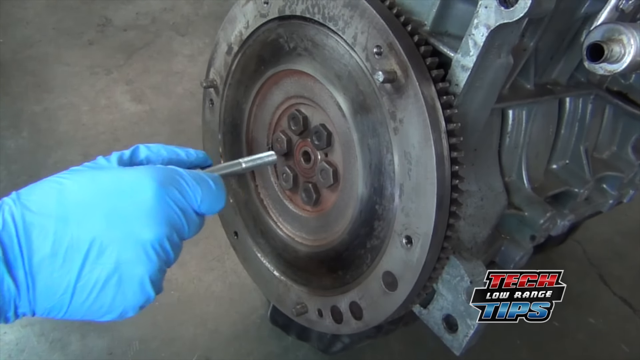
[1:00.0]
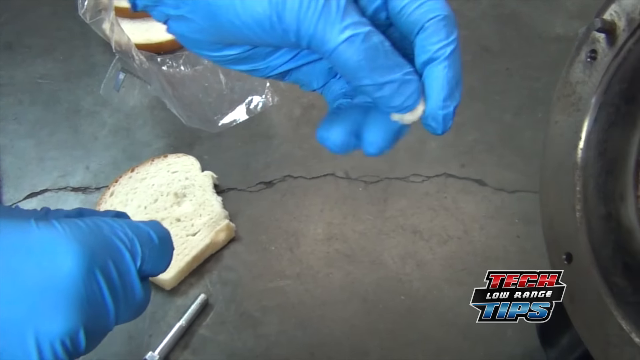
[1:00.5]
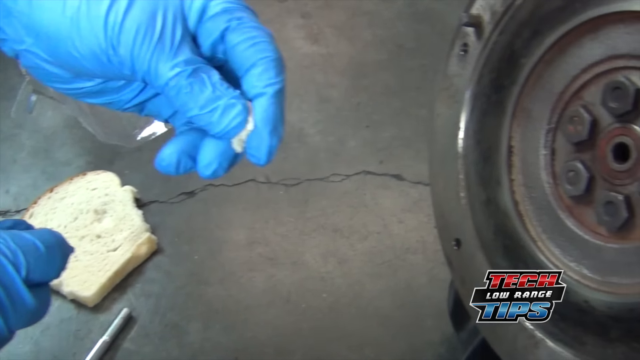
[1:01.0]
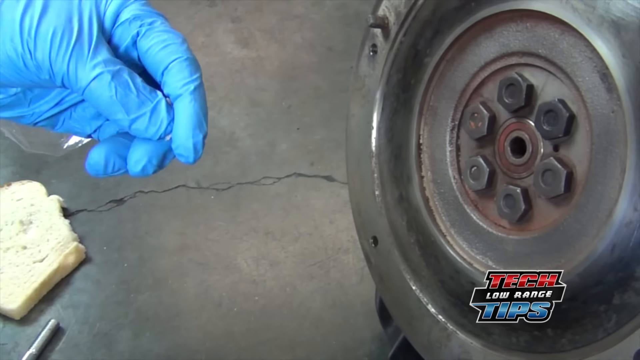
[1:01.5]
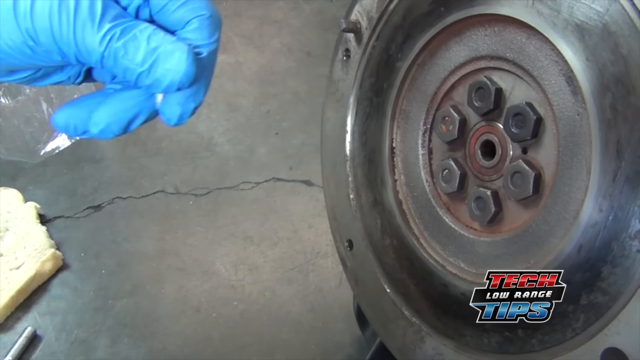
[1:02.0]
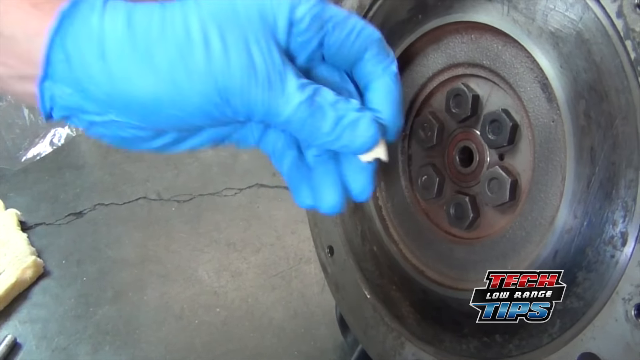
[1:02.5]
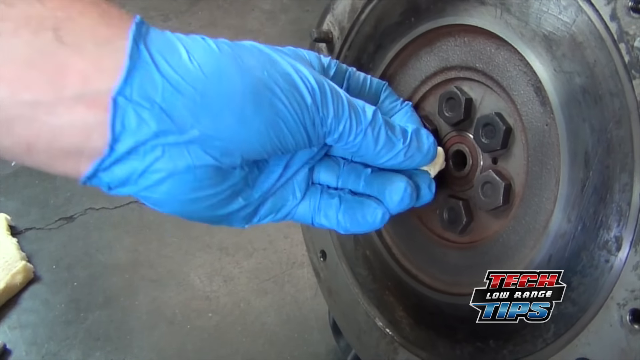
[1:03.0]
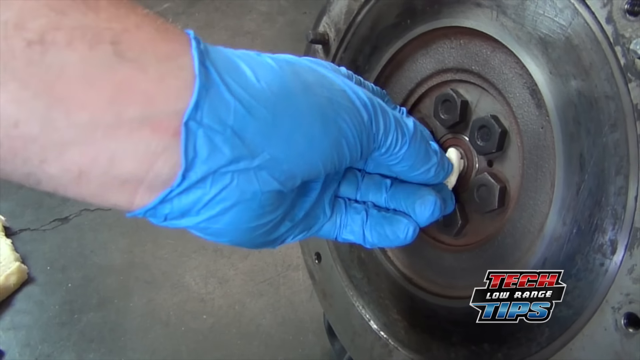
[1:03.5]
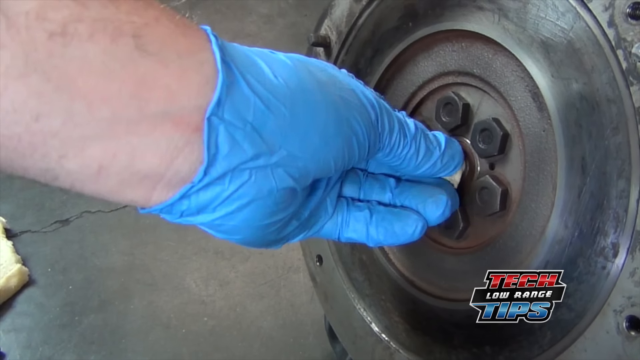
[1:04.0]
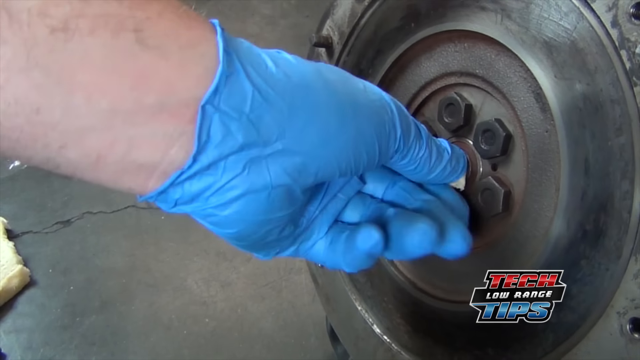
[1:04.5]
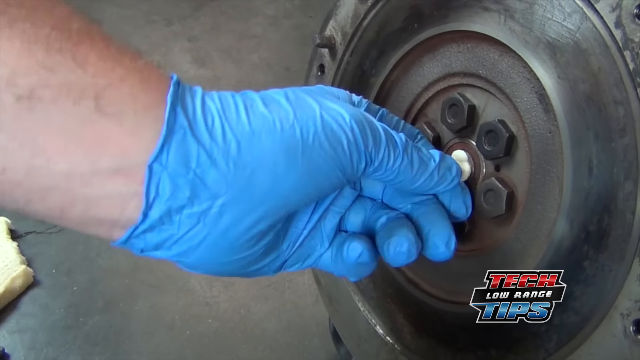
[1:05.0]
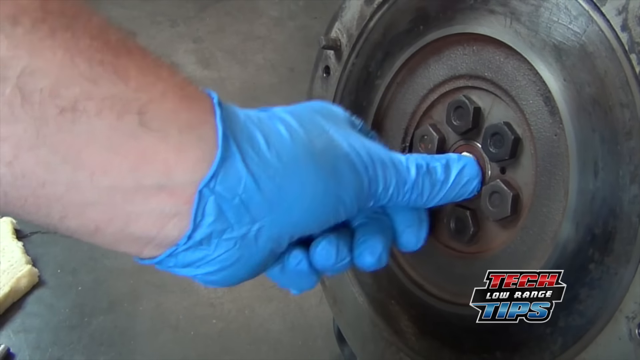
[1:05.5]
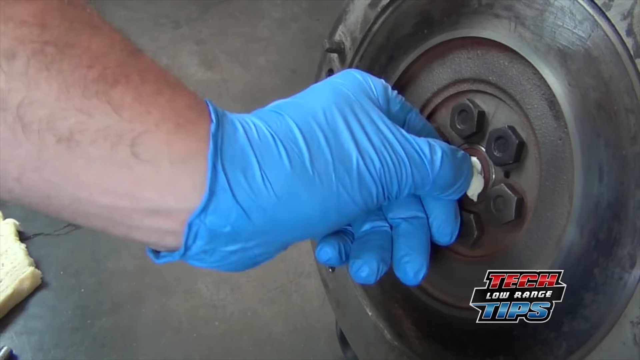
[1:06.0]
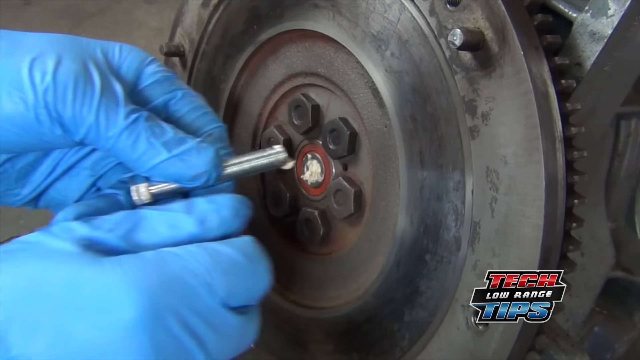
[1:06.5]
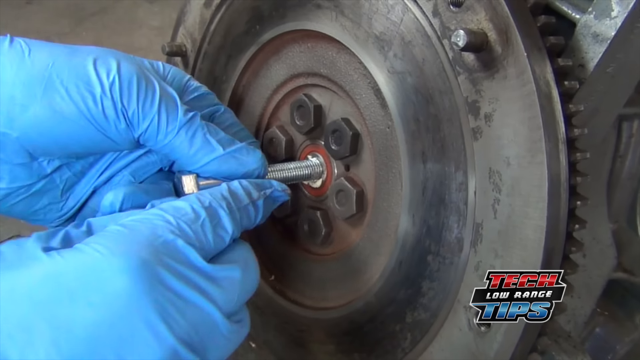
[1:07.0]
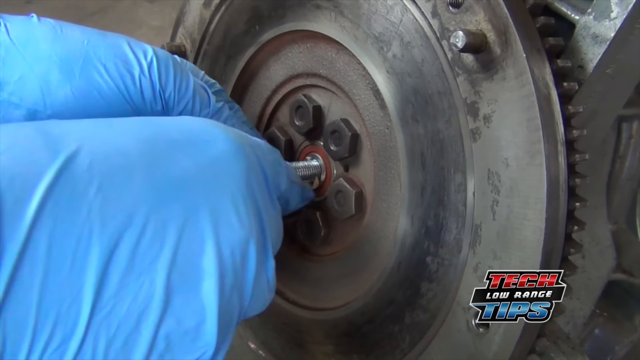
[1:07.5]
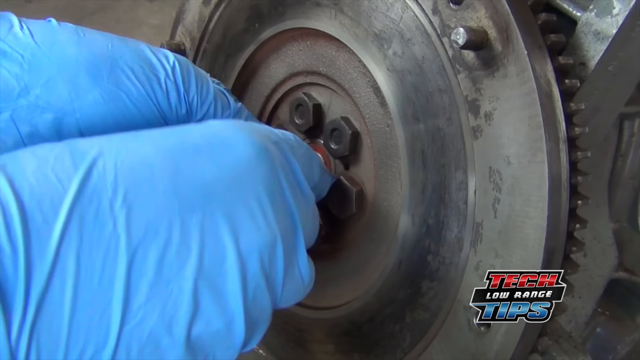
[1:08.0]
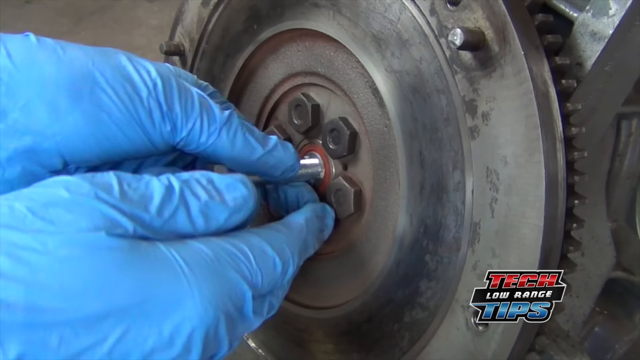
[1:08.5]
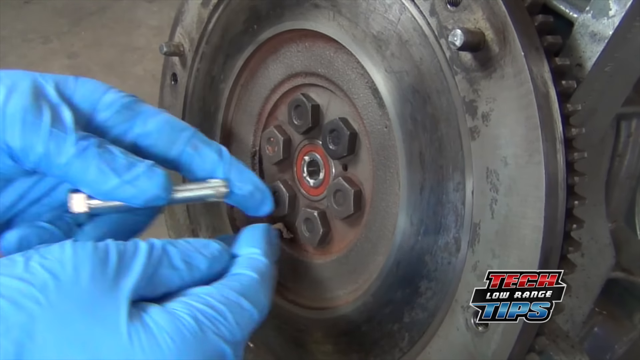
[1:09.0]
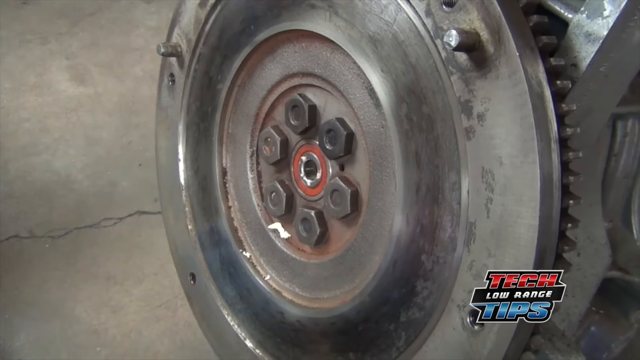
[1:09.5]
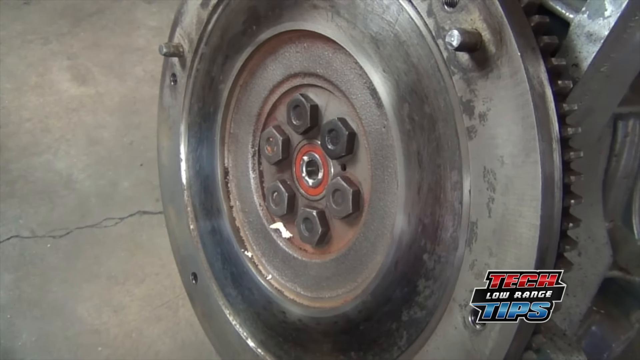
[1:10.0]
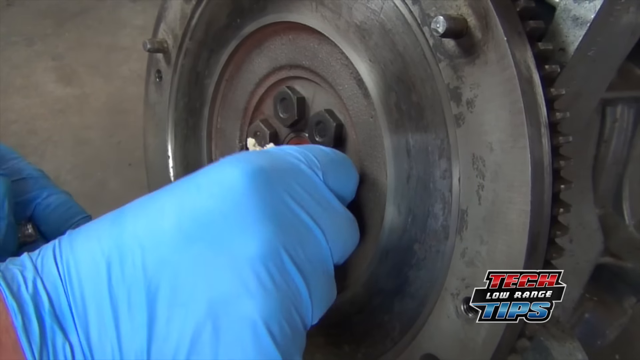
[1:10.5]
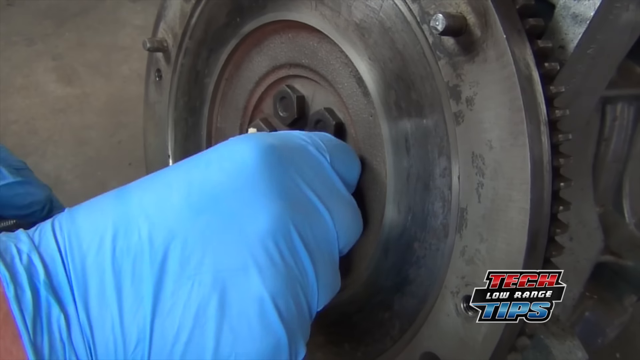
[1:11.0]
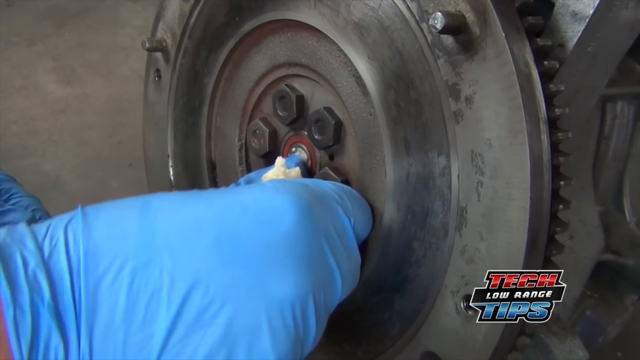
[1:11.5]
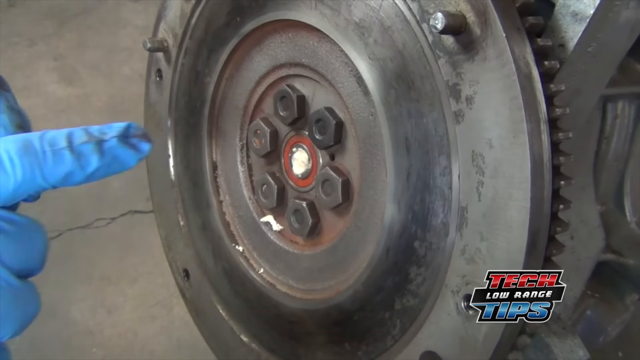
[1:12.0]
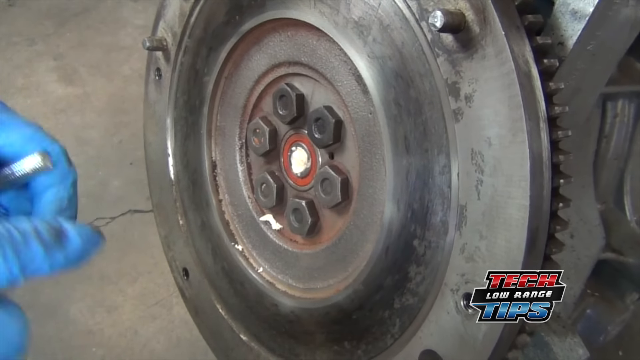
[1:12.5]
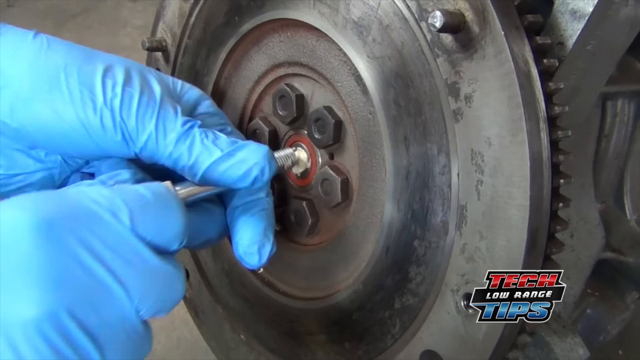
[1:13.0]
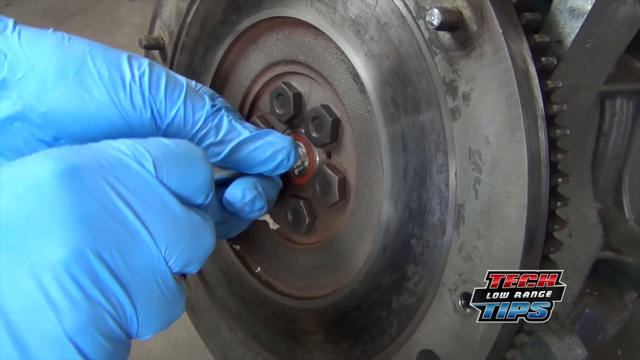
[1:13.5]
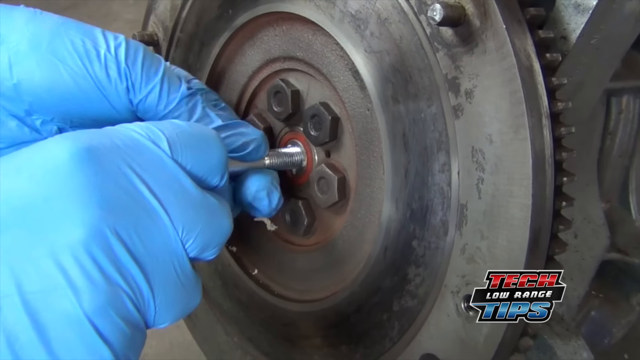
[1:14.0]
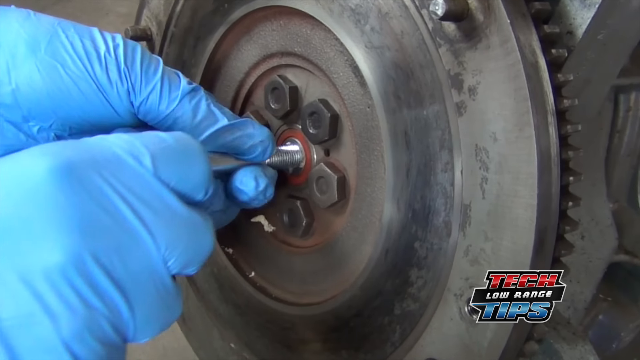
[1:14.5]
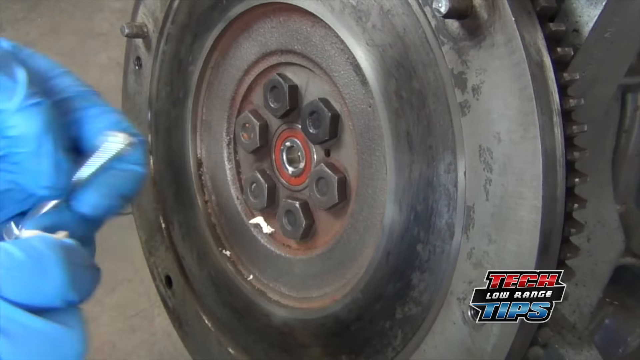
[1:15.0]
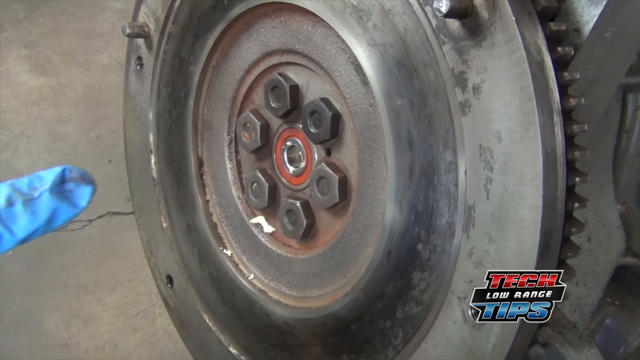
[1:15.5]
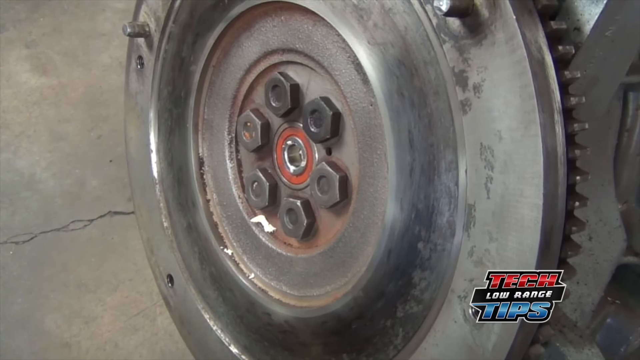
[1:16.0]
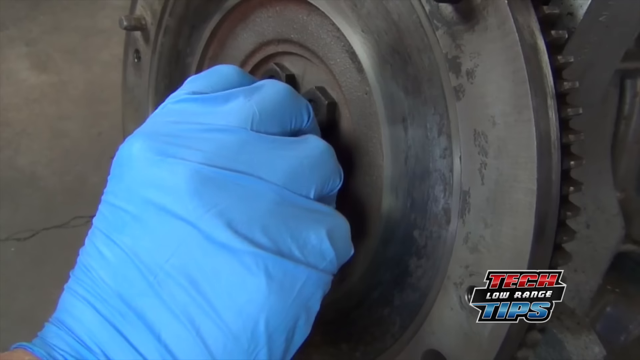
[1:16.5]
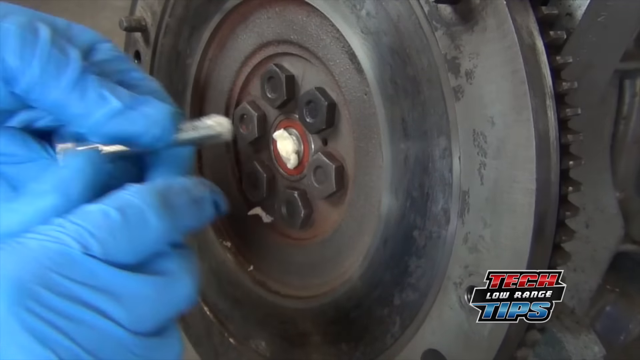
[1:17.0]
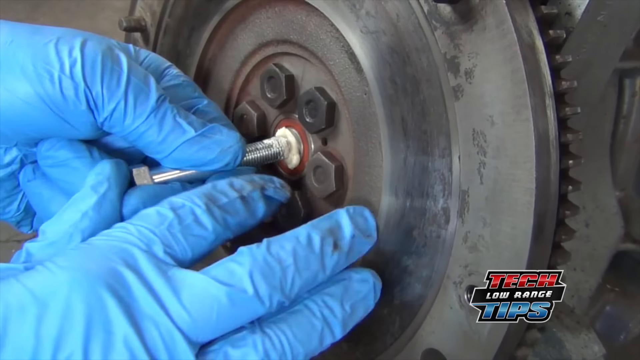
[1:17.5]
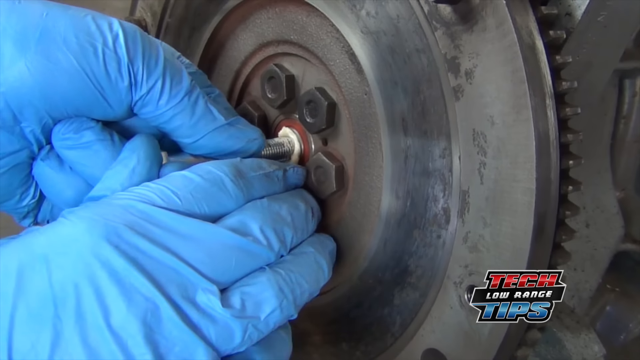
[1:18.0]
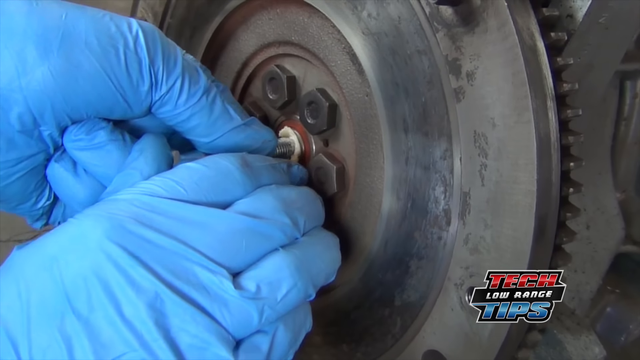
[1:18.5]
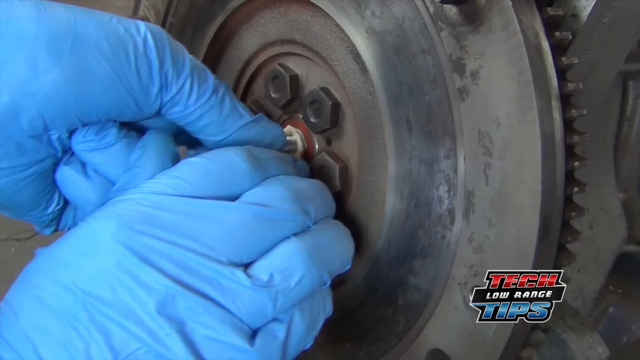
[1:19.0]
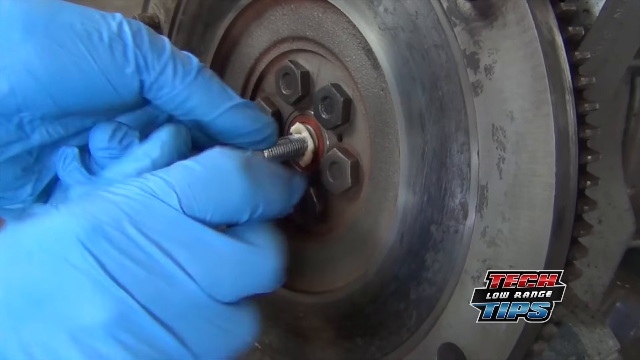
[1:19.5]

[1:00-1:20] The text "tech low range tips" appears. Someone puts little screw bolts into a circular mechanical object, trying to get one into the hole. They then put a piece of what looks like bread into the hole, put the screw into the hole with the bread and push the bread in. They keep breaking off more pieces of bread, stuffing them into the hole and using the screw to press them down, over and over.